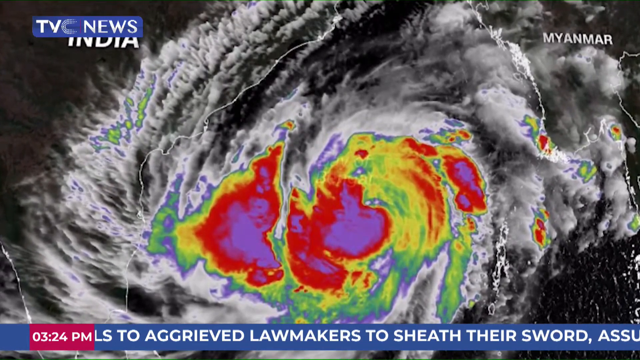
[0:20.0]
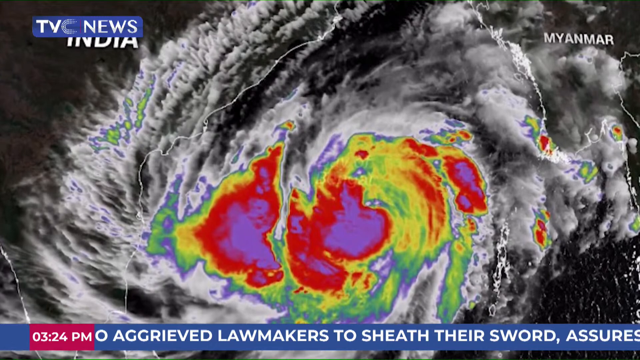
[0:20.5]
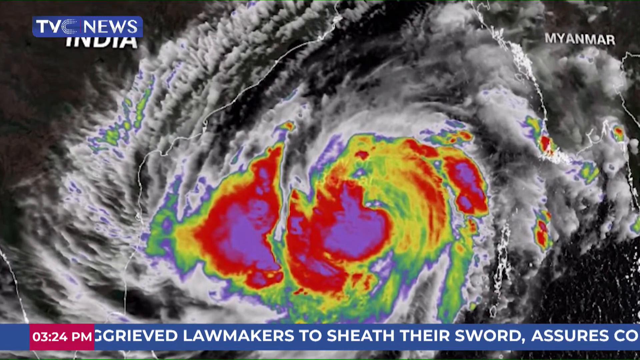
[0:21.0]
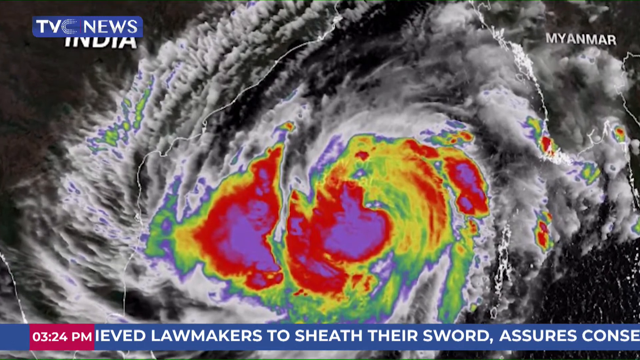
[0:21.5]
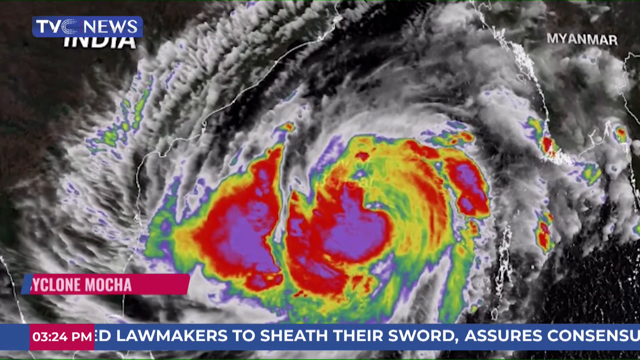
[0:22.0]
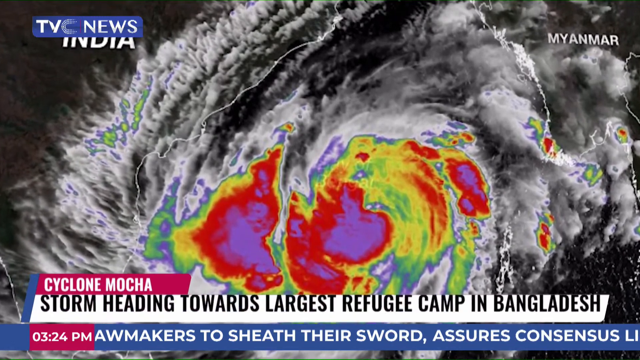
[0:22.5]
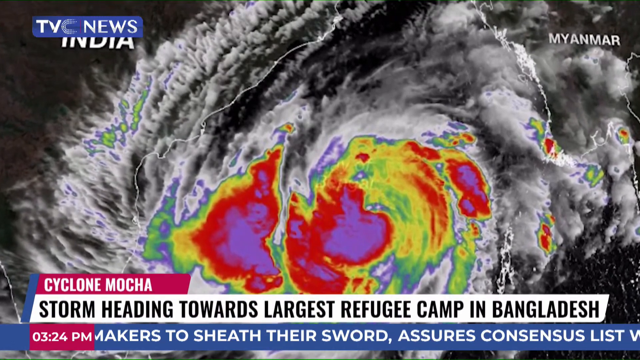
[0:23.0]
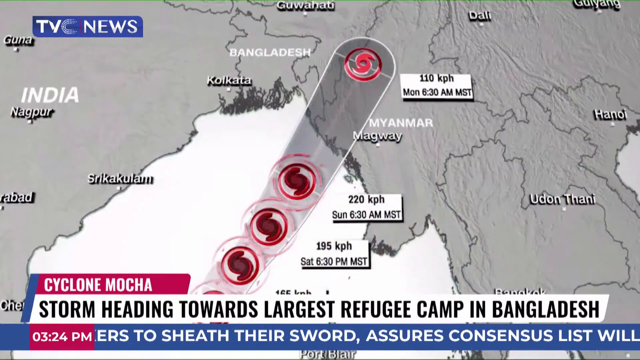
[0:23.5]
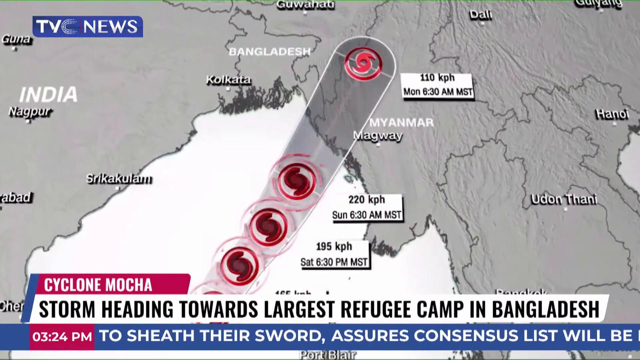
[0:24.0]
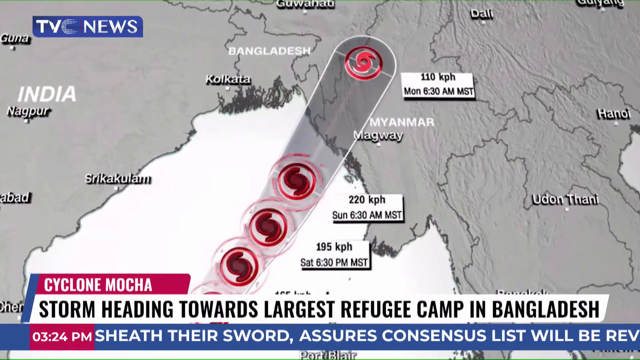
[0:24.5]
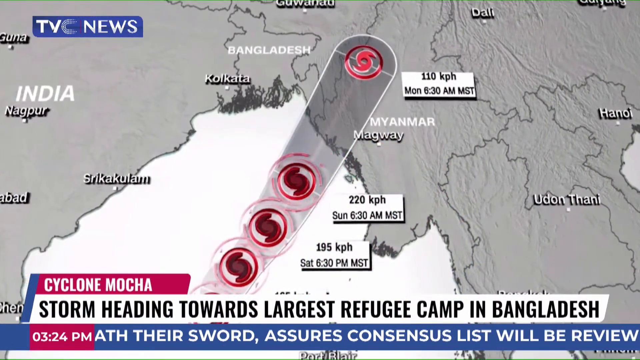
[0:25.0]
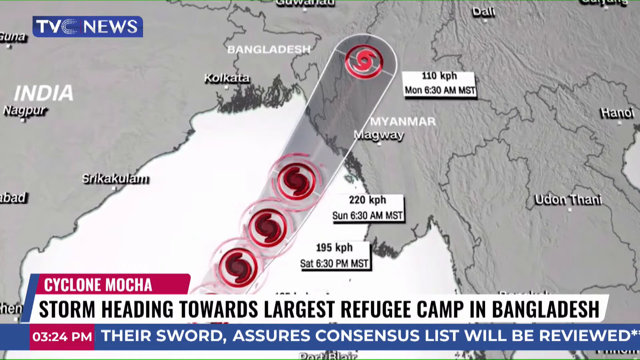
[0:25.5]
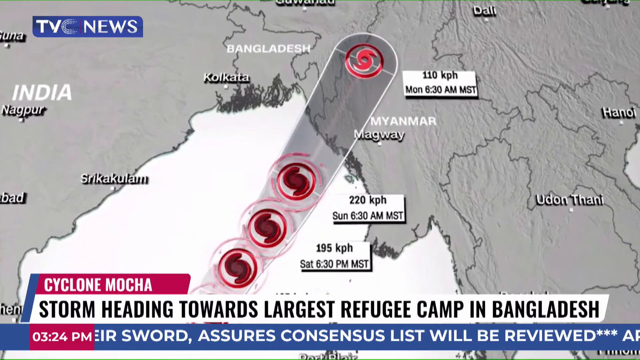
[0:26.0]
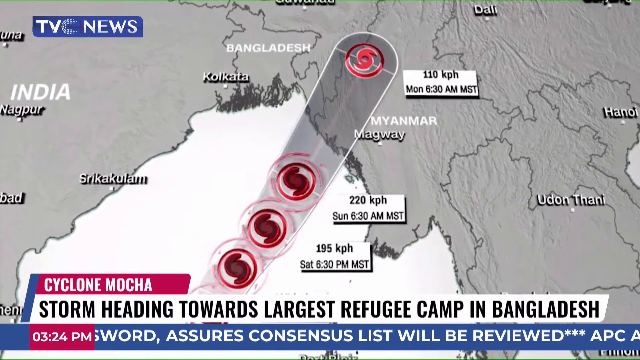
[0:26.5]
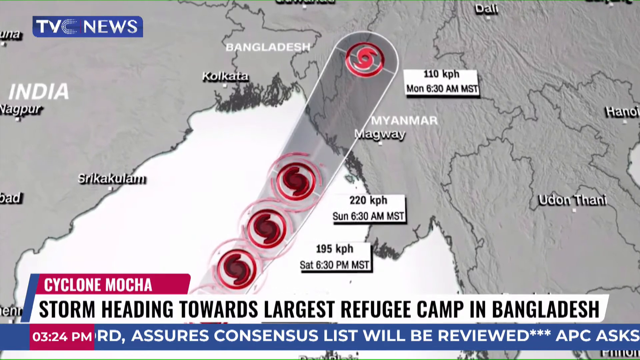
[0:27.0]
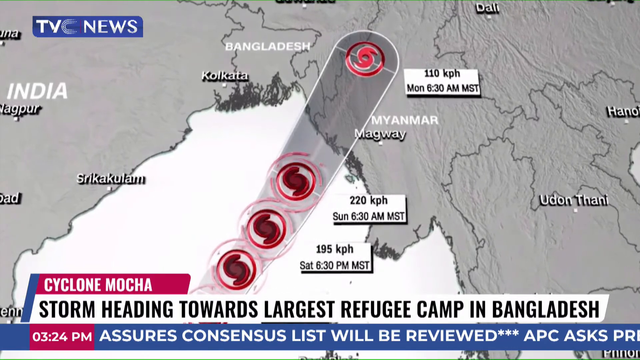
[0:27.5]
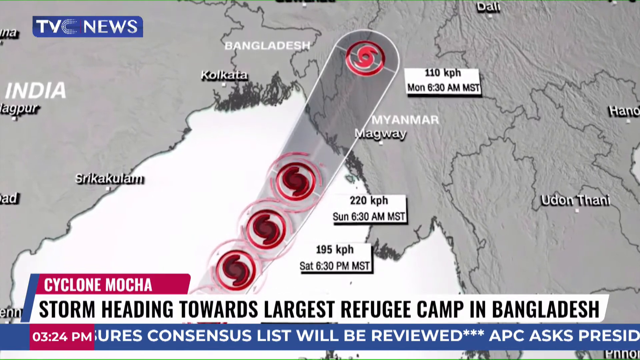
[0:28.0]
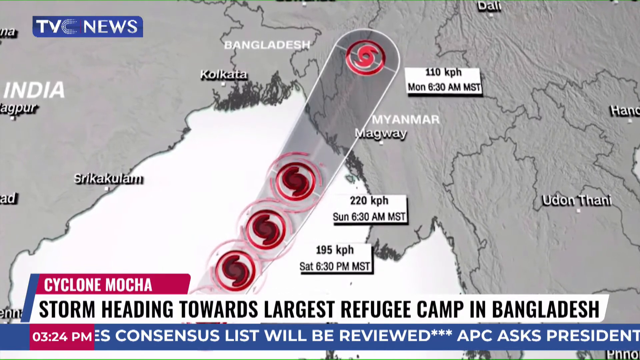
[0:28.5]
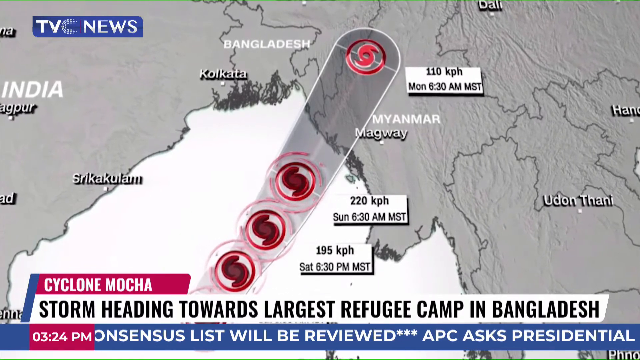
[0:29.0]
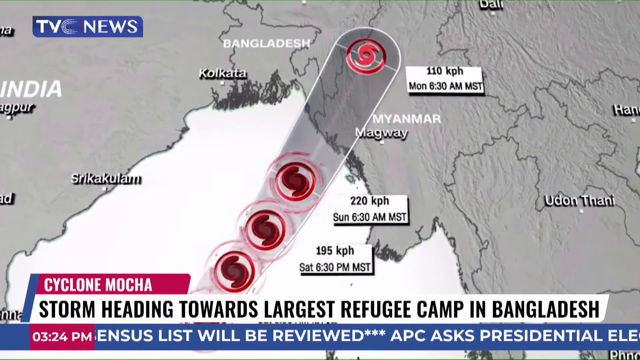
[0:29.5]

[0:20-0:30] Predicted wind speeds are shown, with the winds expected to reach huge speeds by six o'clock tonight.